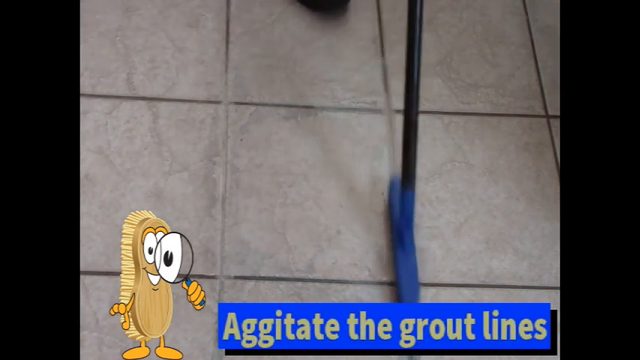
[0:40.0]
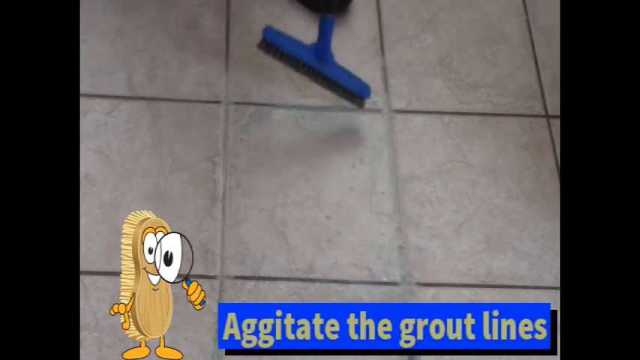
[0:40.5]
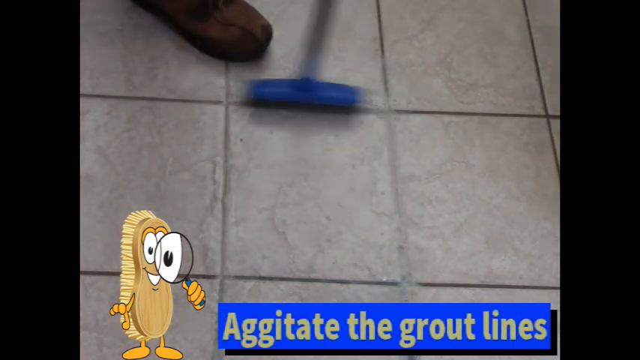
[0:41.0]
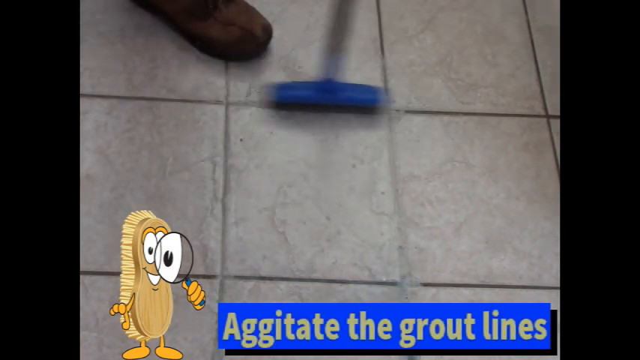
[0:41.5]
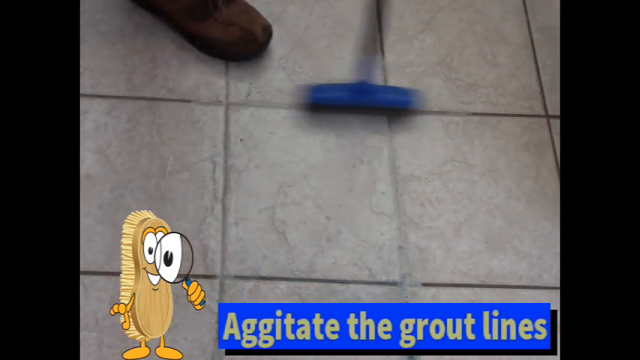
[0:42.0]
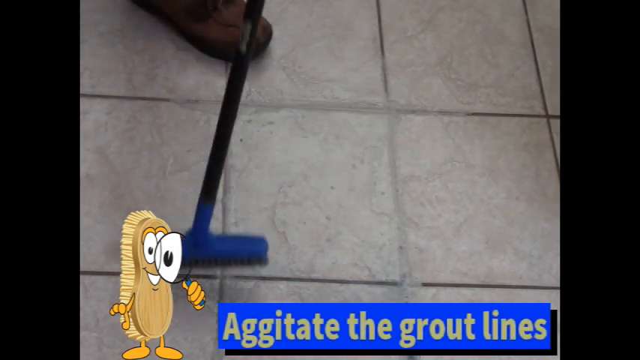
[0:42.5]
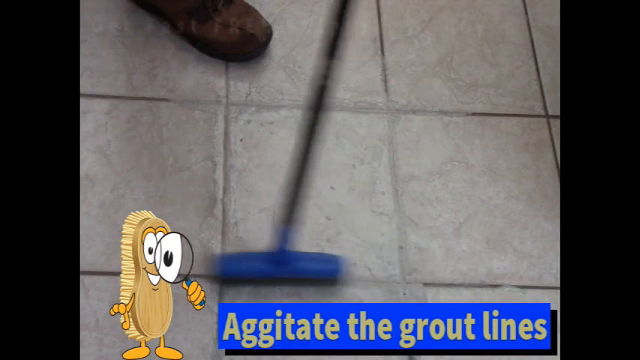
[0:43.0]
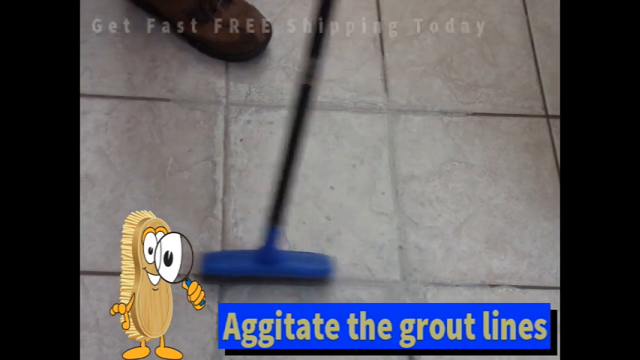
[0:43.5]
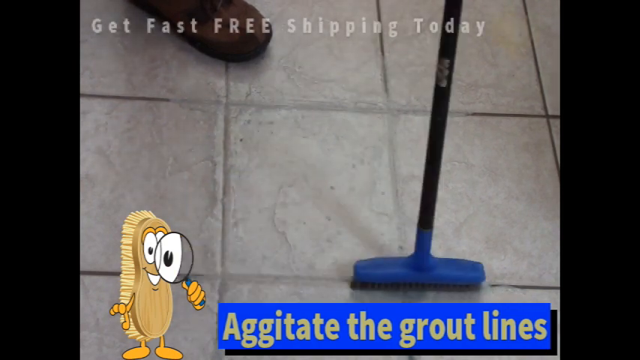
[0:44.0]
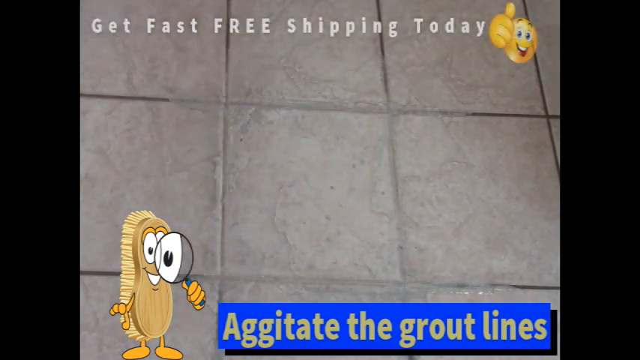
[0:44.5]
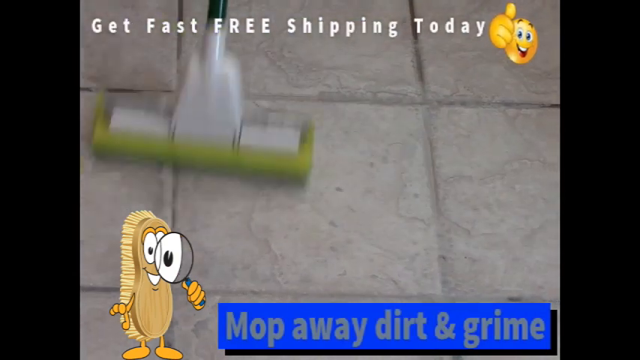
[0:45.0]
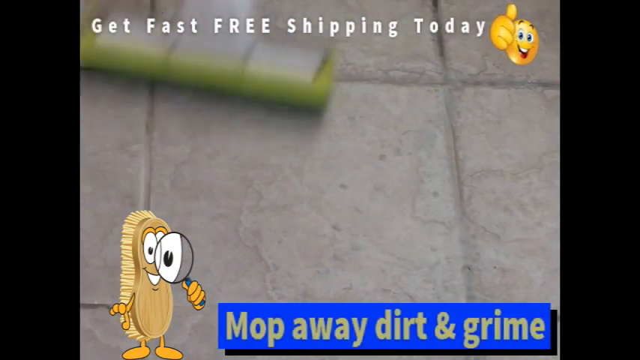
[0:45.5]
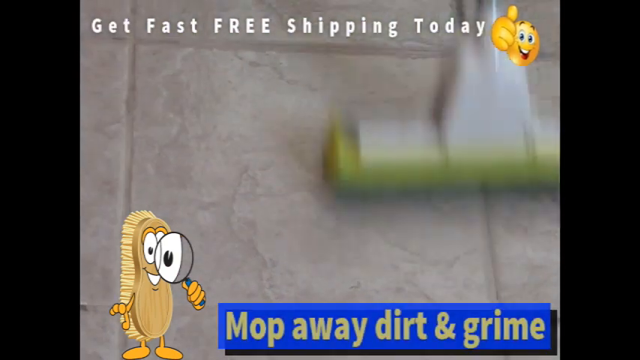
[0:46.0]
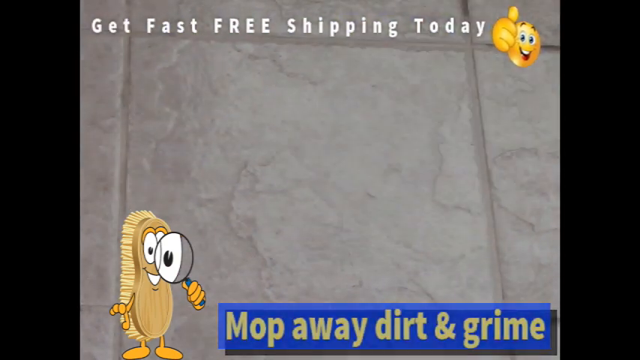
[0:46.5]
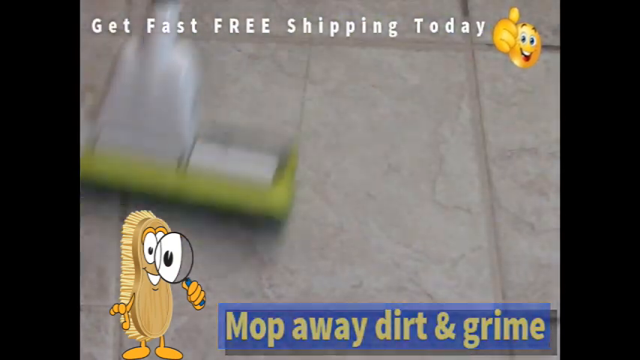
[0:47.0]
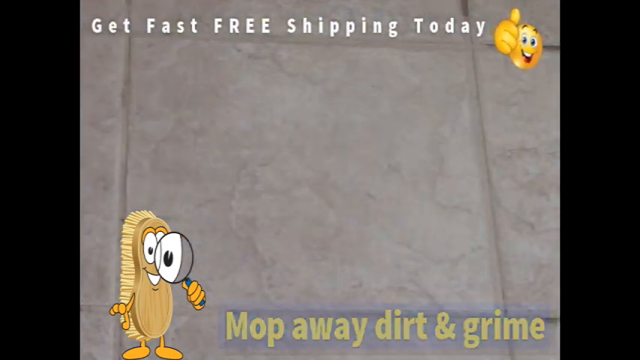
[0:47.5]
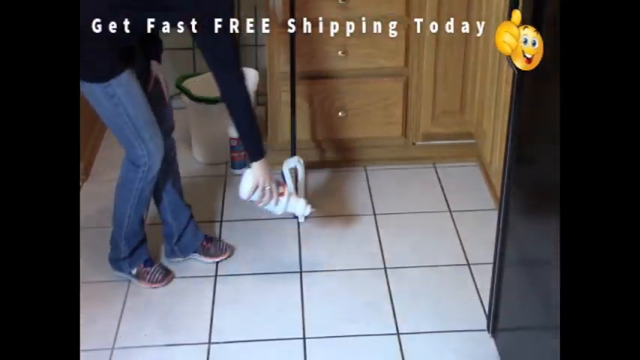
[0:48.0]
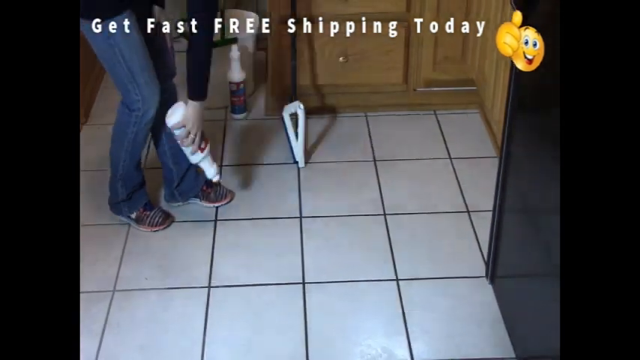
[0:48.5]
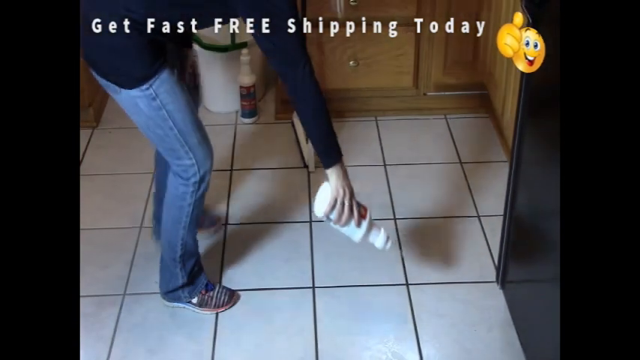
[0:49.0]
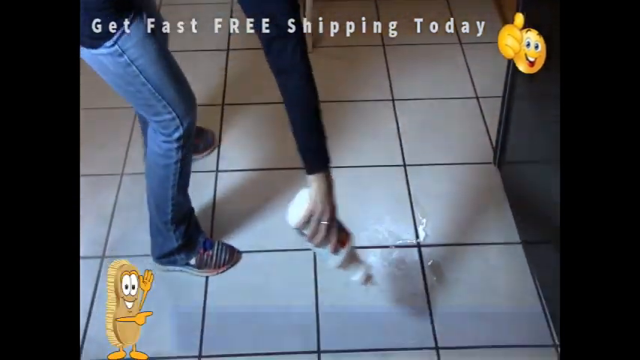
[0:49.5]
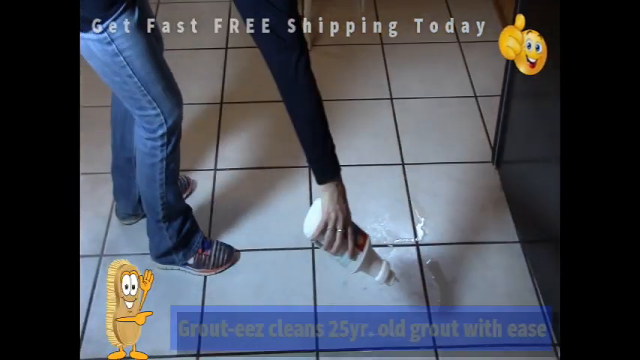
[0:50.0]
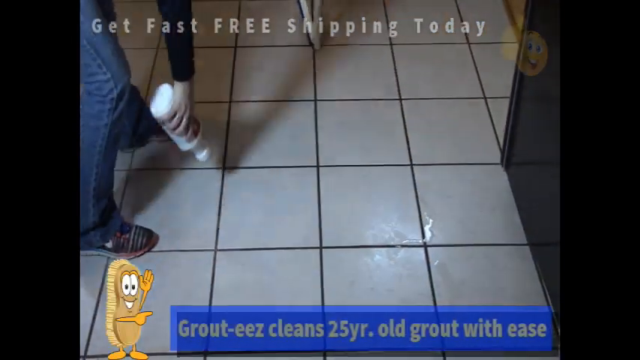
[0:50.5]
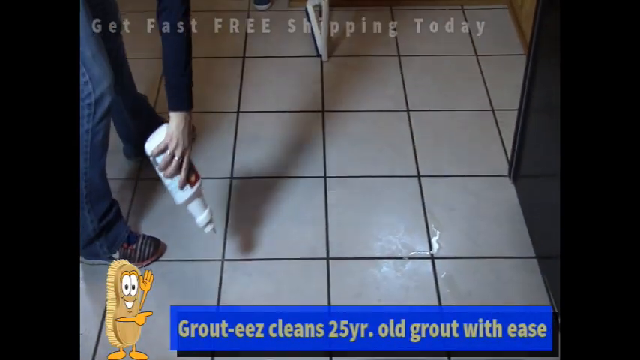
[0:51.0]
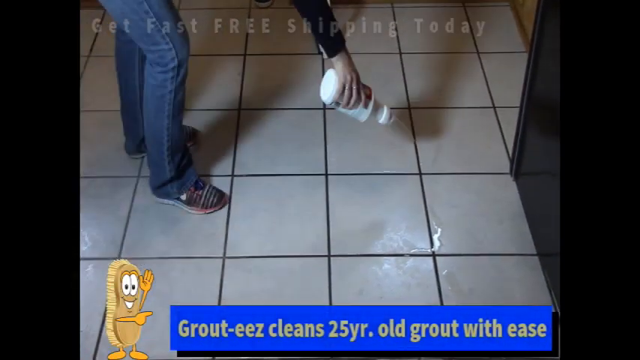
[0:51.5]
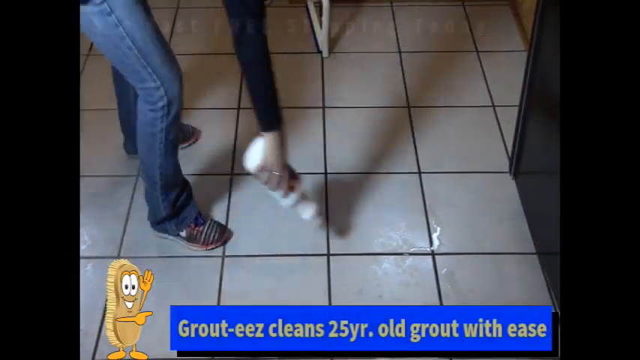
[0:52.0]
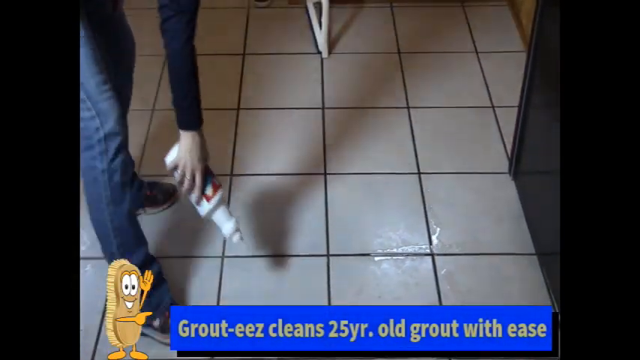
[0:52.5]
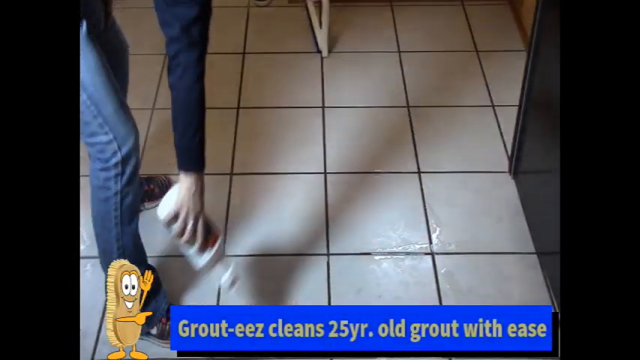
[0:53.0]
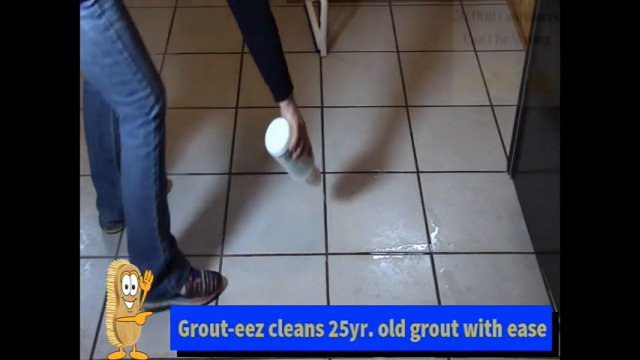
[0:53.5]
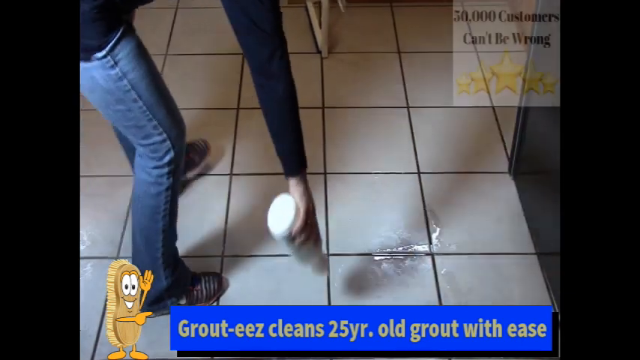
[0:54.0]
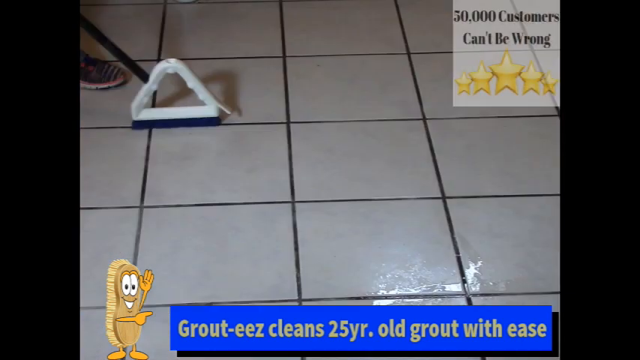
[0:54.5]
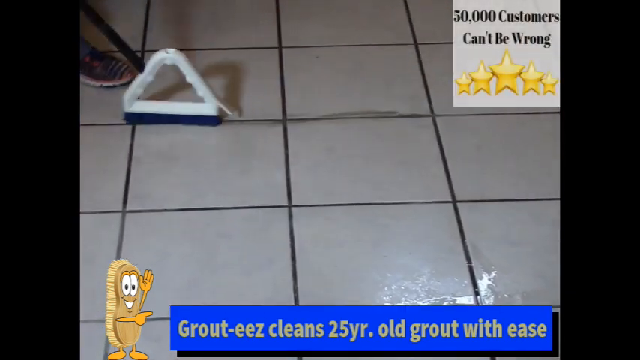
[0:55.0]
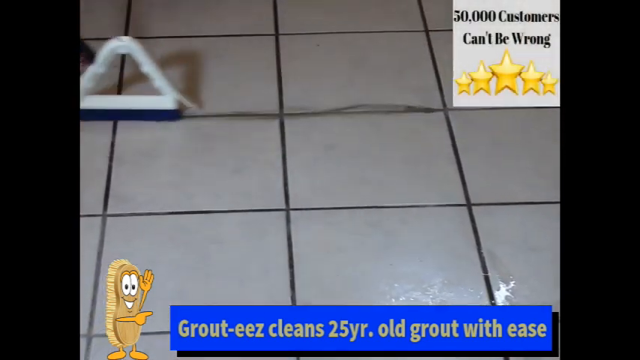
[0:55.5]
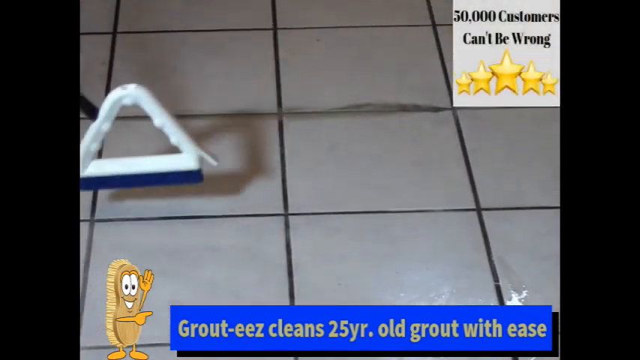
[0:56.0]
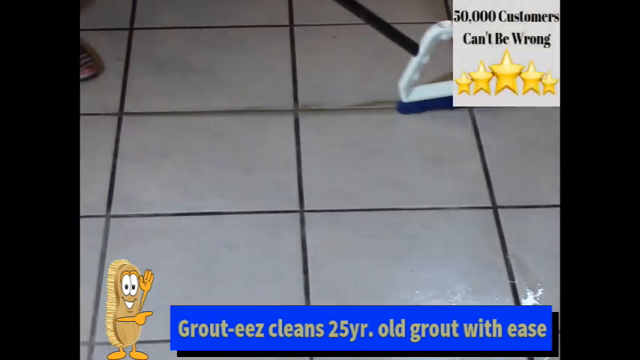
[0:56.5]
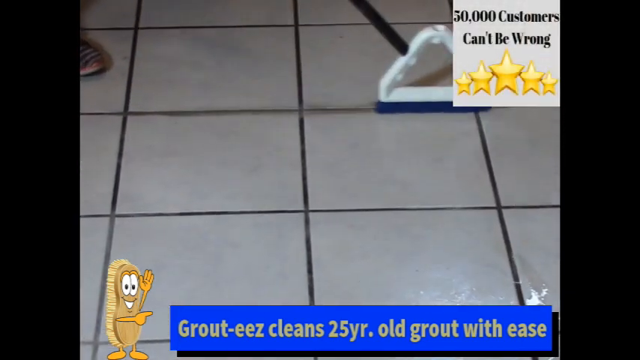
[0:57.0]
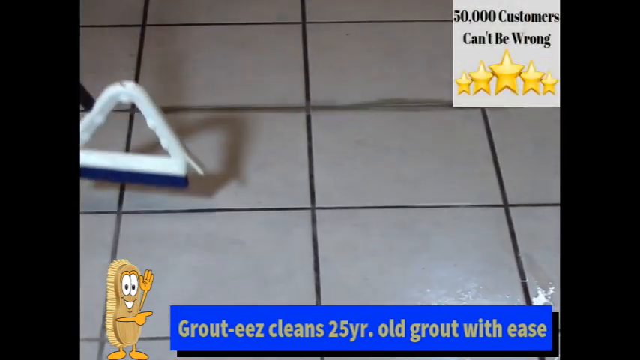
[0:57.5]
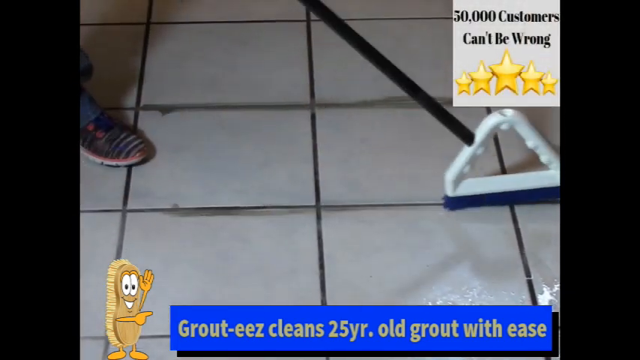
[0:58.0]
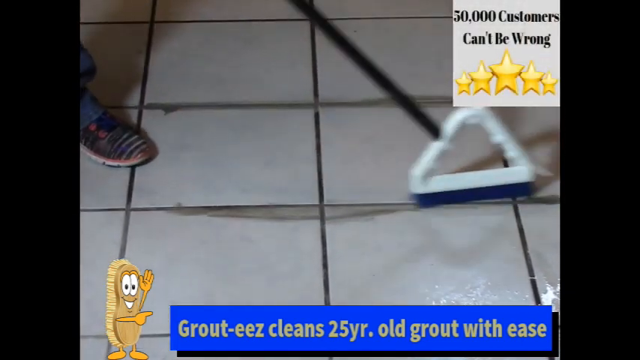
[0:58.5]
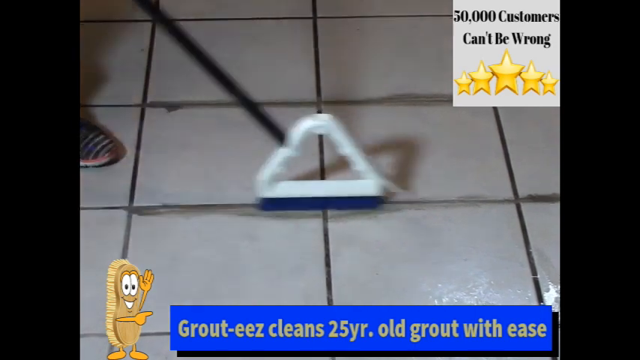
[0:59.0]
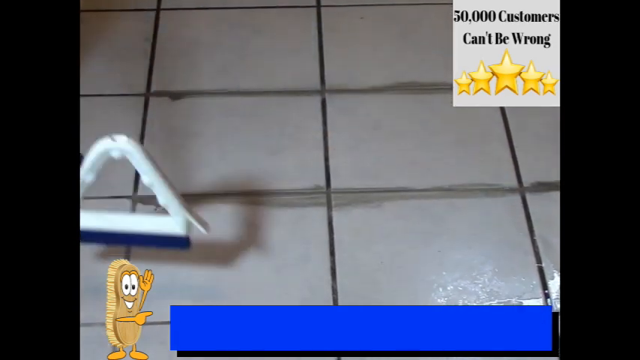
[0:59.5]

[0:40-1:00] Two black squares are on the left and right sides, with a gray tiled floor in the center. A person with brown shoes holds a black-tubed blue brush. A blue box at the bottom says in white lettering "aggregate the grout lines." On the left side is a brown rounded brush with brown bristles, orange hands, dotted white eyes, white teeth and orange feet. She scrubs the tile. White lettering appears at the top reading "get fast free shipping today," along with an orange circle with blue eyes and white teeth, a three-fingered thumbs up, and a fist beside it on the left side. She then mops the floor. In a side view, she wears a long dark blue top, blue jeans and pink and white runners. She has a white bottle in her hand; there are brown drawers toward the center top, a gray tile floor, a black fridge on the right side and a white bucket toward the left. She sprays the grout lines. A white box appears on the right side with black lettering that says "50,000 customers, can't be wrong," with five stars. The blue box at the bottom says in white lettering "grout, easy cleans, 25 year old grout with ease." She holds a black-handled broom with a triangular white piece and a blue brush underneath, and scrubs the gray tile.